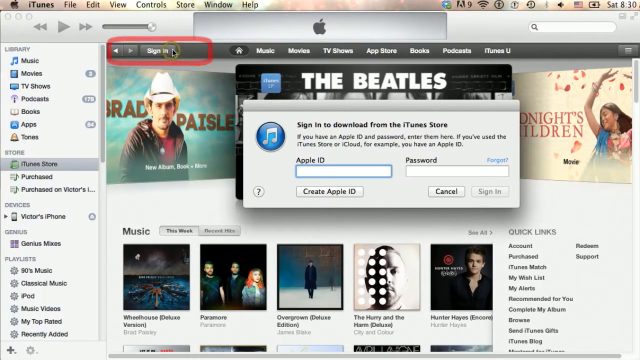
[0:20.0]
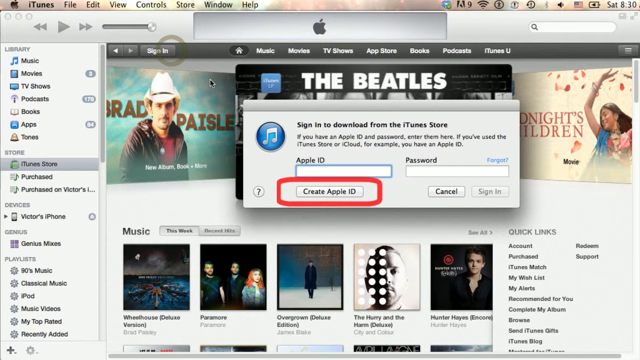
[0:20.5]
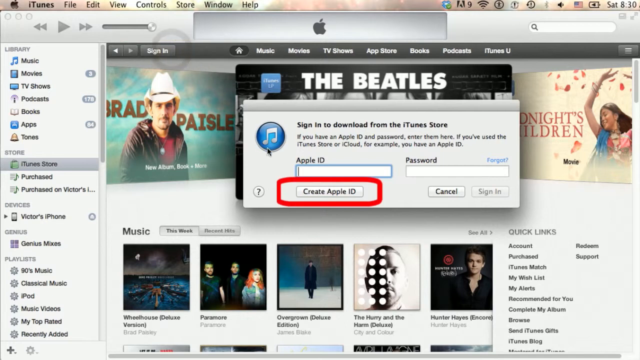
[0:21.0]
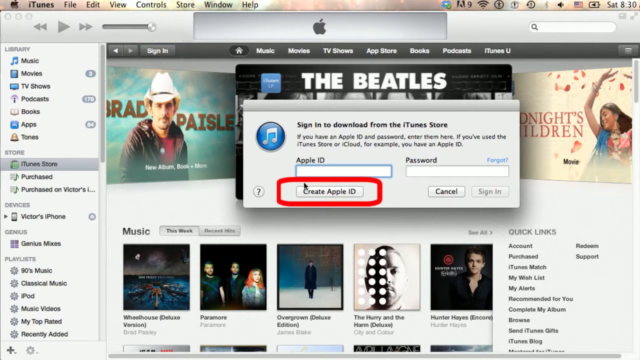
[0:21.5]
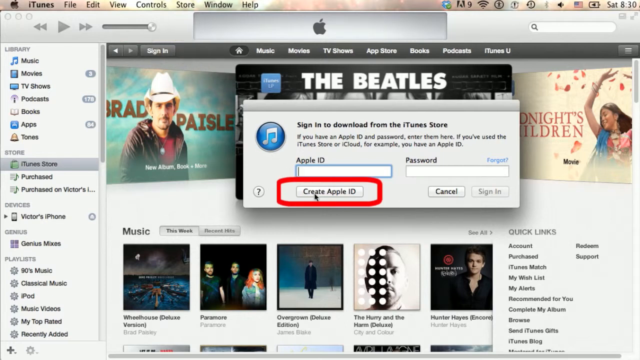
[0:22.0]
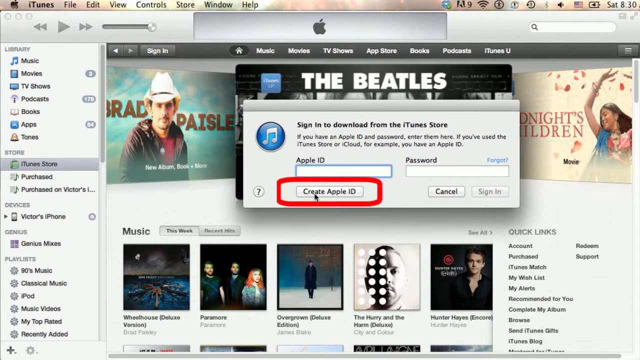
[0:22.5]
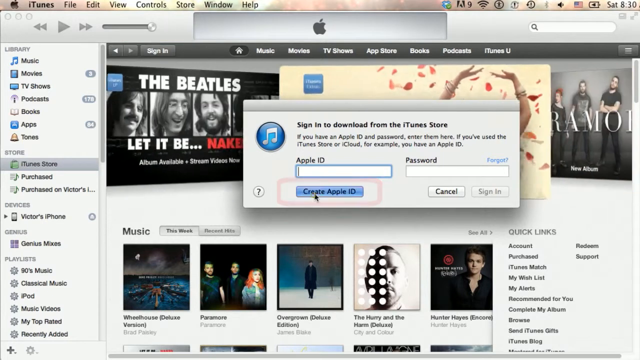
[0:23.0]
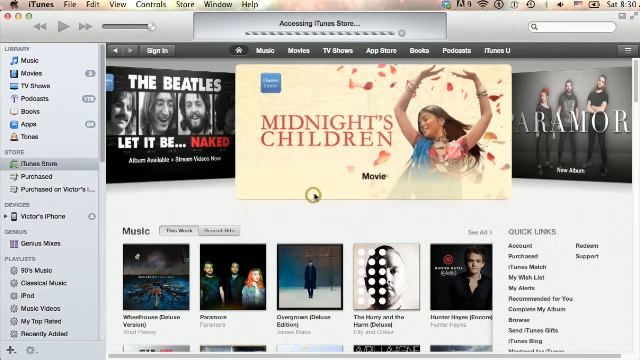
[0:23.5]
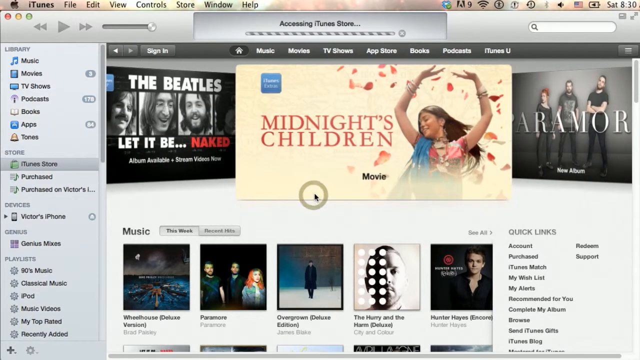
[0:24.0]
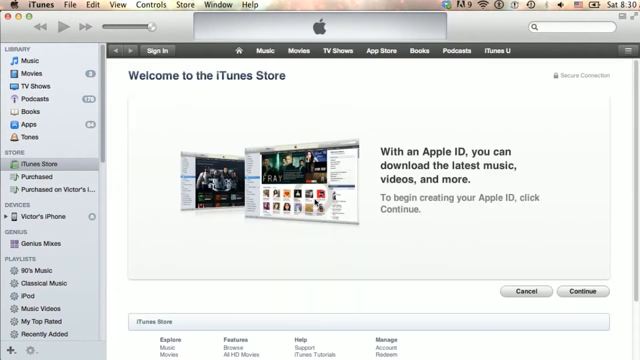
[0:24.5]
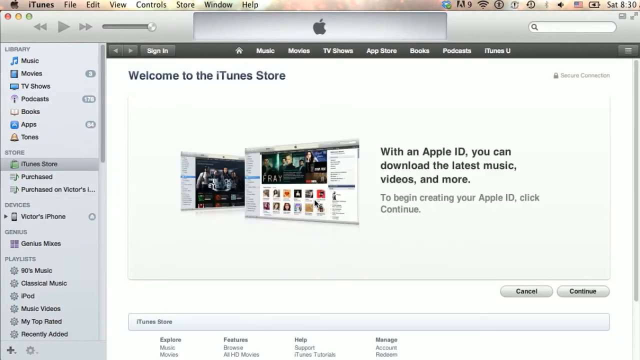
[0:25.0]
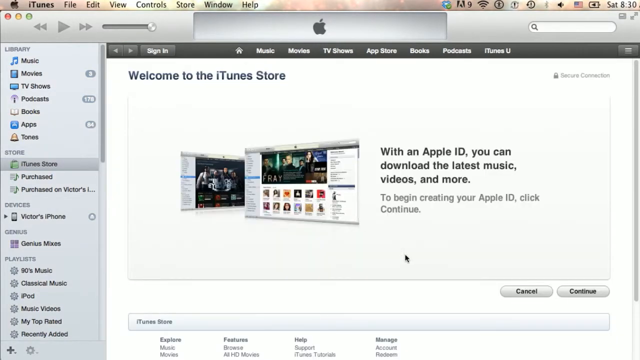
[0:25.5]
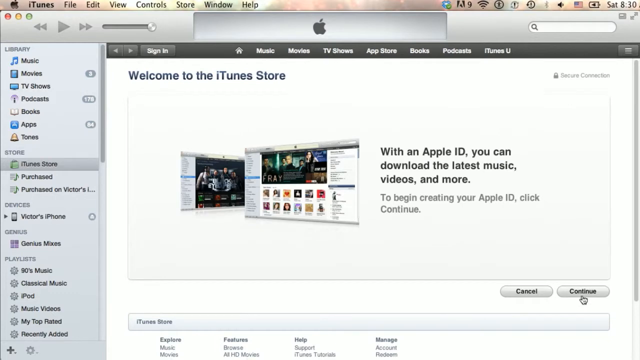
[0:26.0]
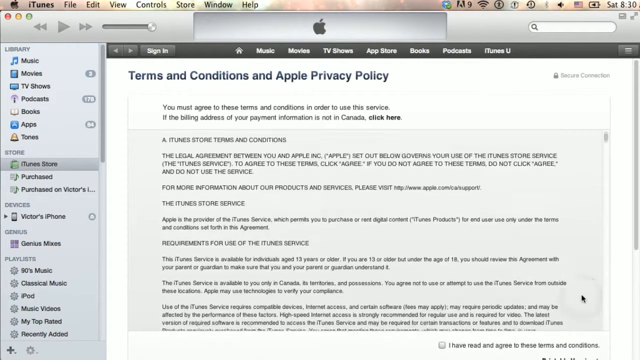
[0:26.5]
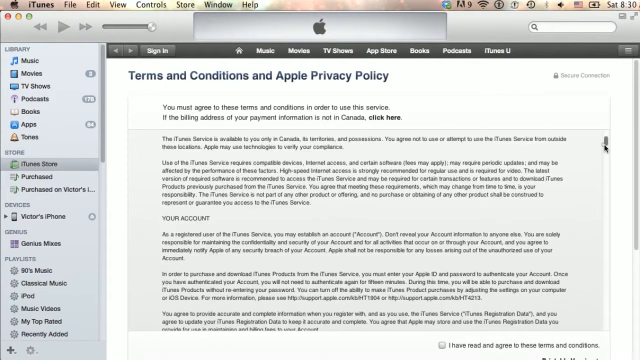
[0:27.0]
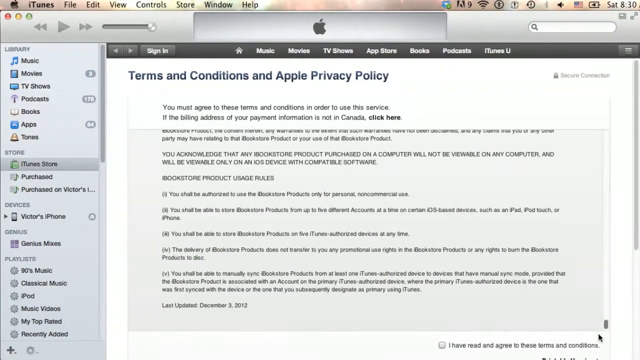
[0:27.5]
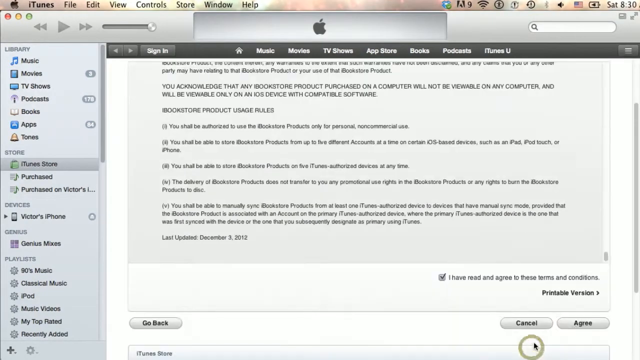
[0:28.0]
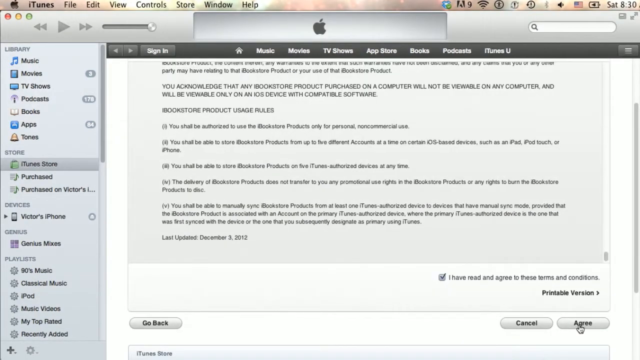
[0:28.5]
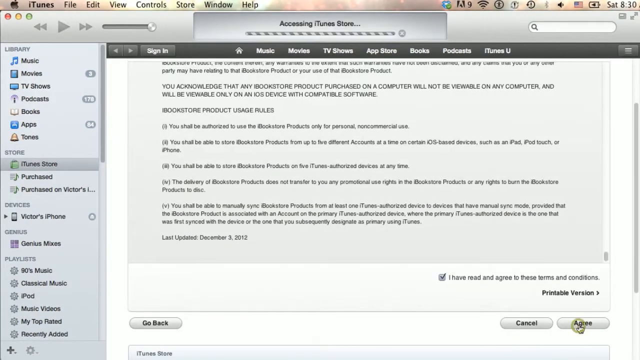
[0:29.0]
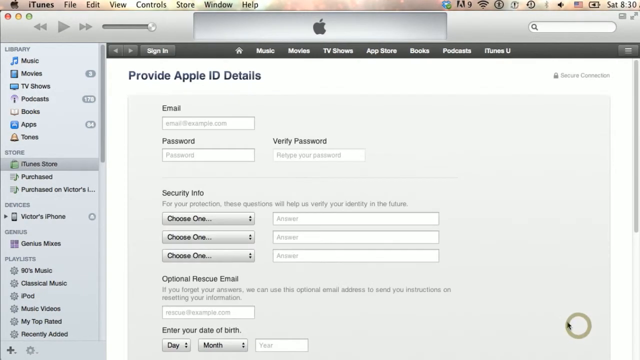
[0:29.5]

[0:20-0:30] What looks like an iTunes application is shown on an Apple device, with the navigation bar at the top reading iTunes, File, Edit, View, Control, Store, Window and Help. The sign-in button at the top left is circled in a red rectangle, and a pop-up with an Apple ID prompt and a password prompt says "sign in to download from the iTunes store." Below the Apple ID prompt is a button that reads "create Apple ID"; a red rectangle is drawn around it, and the black mouse cursor moves down and clicks it. This leads to what looks like a welcome to the iTunes store screen reading "with an Apple ID you can download the latest music videos and more," with a continue button at the bottom right, which the mouse clicks. Terms and conditions and the Apple privacy policy appear. The mouse scrolls down, dragging the scroll bar all the way to the bottom, and clicks an agree button at the bottom right. A form then appears that says "provide Apple ID details," with email, password, verify password, security info and a number of other options.